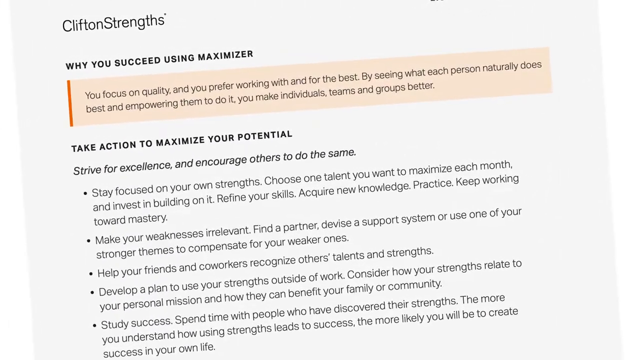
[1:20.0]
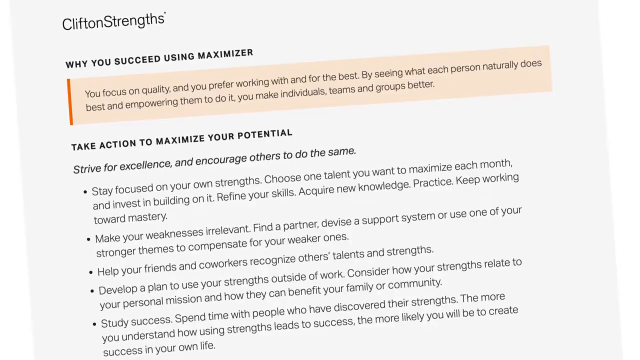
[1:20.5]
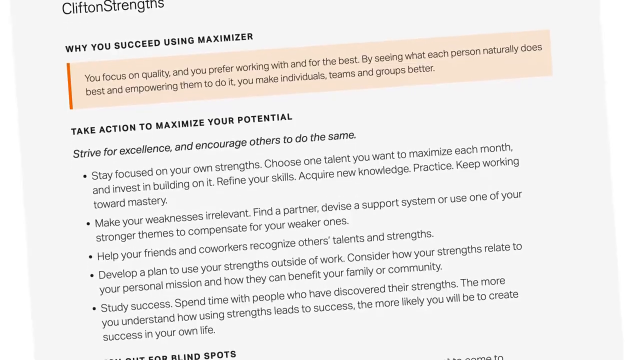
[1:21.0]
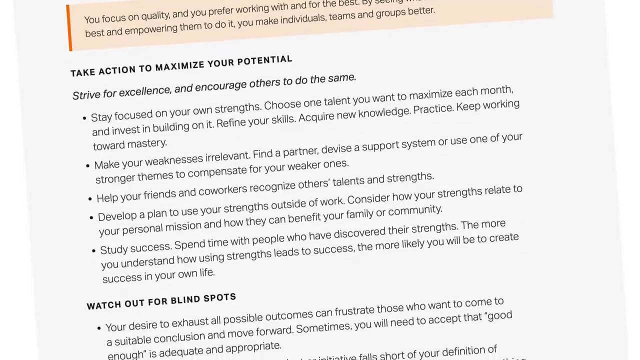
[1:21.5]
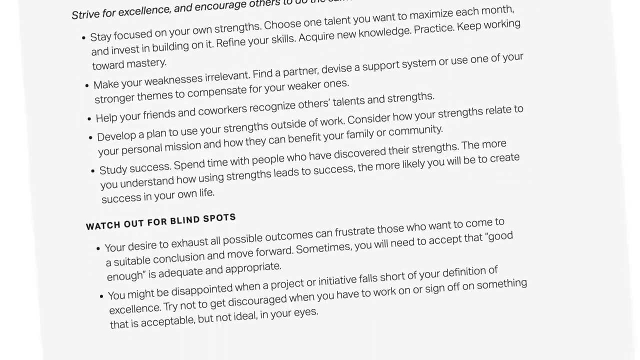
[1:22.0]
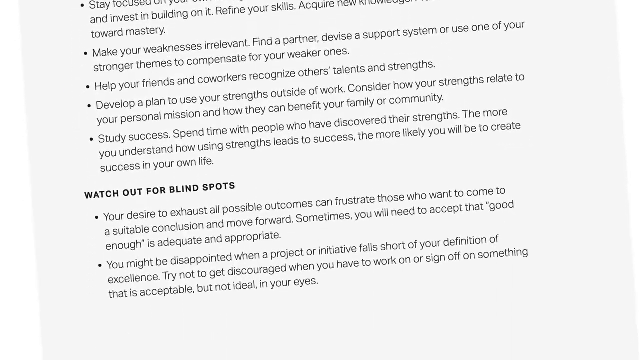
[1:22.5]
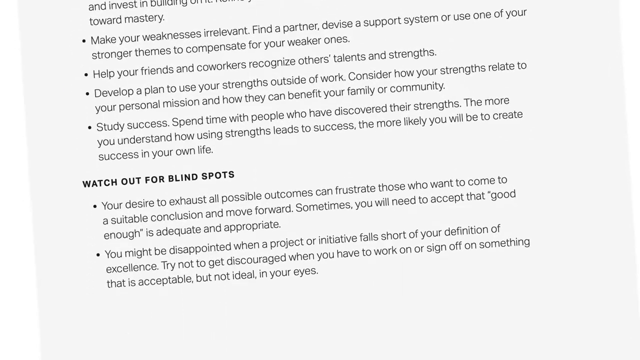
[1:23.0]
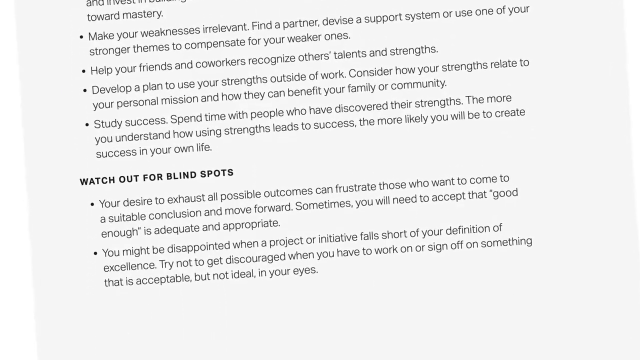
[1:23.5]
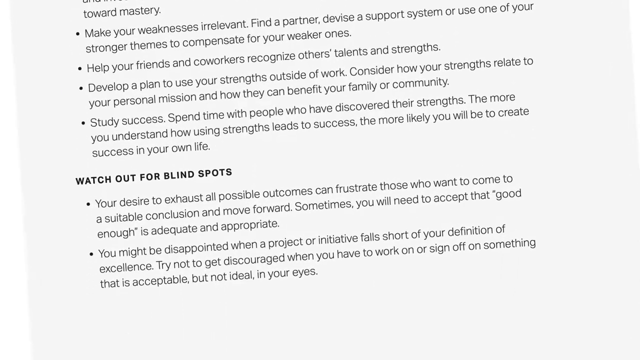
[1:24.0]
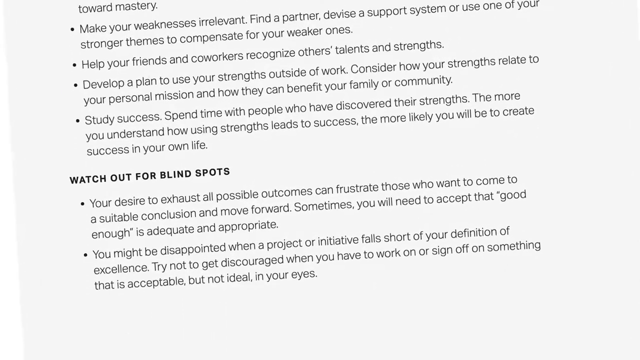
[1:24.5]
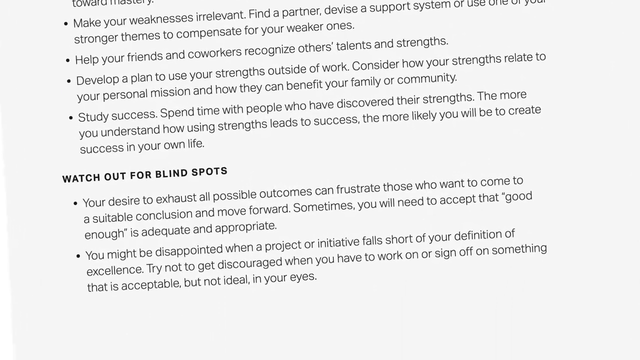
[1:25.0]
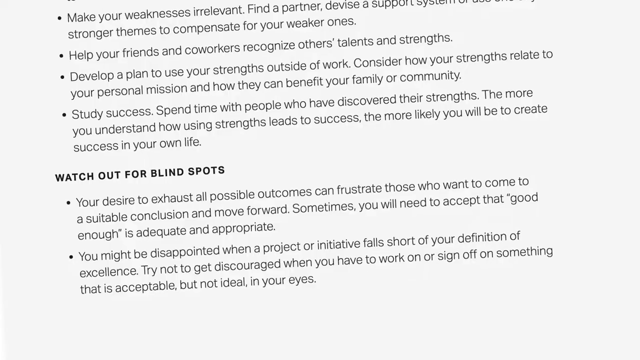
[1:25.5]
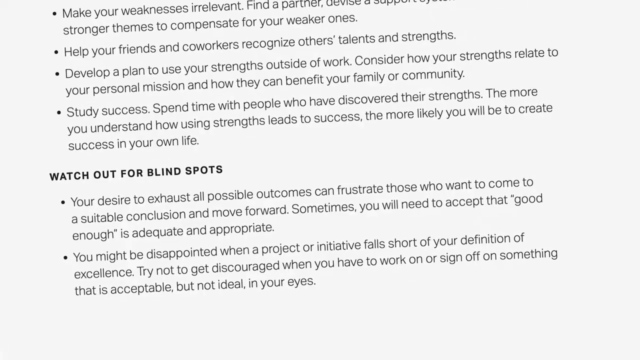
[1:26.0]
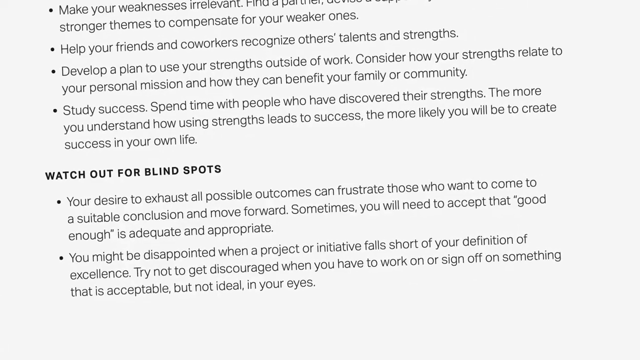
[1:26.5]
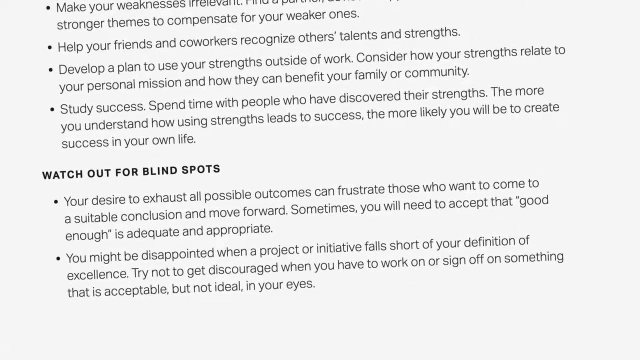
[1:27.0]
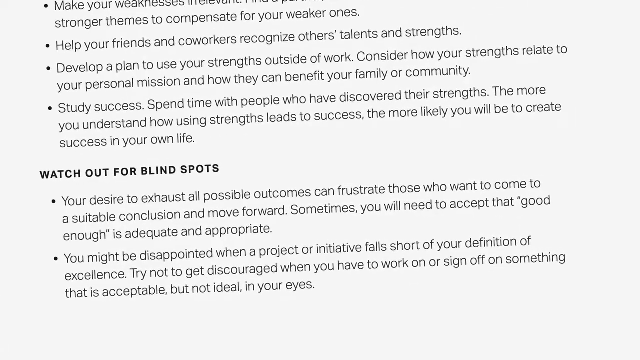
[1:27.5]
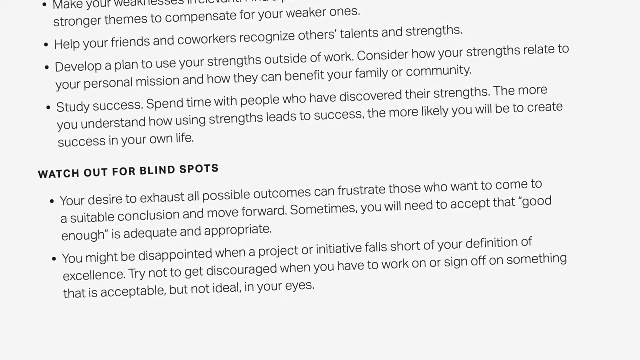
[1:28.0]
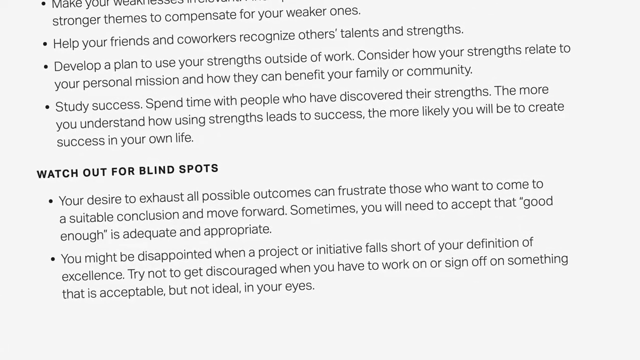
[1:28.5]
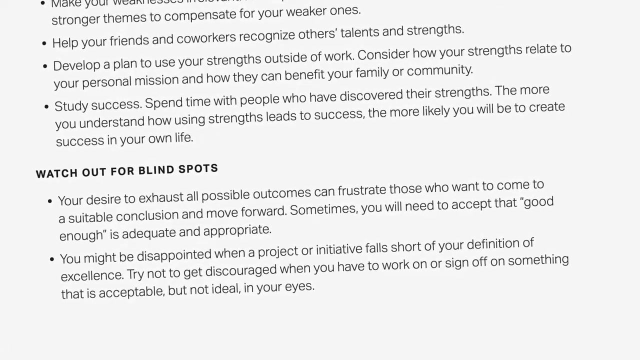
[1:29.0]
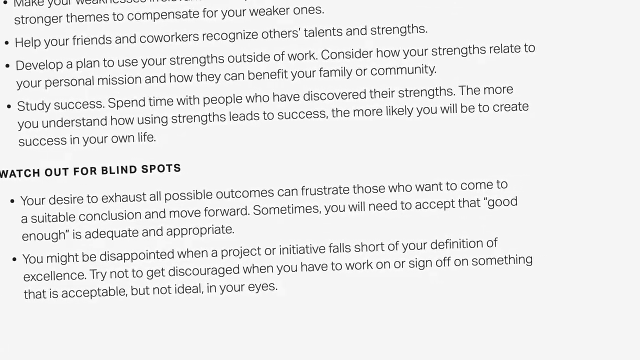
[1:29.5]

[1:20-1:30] The maximizer page is still shown, with a section that says "watch out for blind spots your desire to exhaust all possible outcomes can frustrate those", apparently still about the maximizer. No other pages appear; the view moves to the bottom of this page and zooms in on it. Other text there includes "help your friends and co-workers recognize others talents", "develop plan to use your strengths outside of work", "consider how your strengths relate to your personal mission and how they can benefit your family or community", "study success" and "the more you understand how using strengths leads to success more likely you will be to create success in your own life".